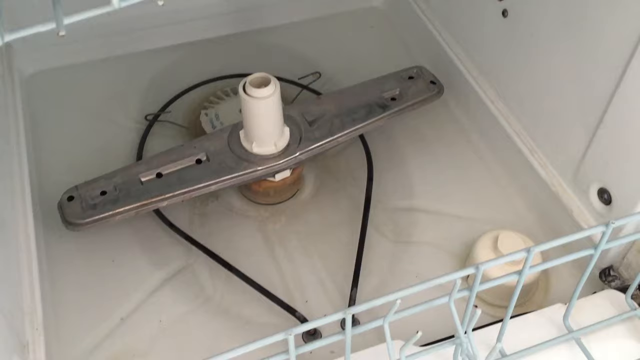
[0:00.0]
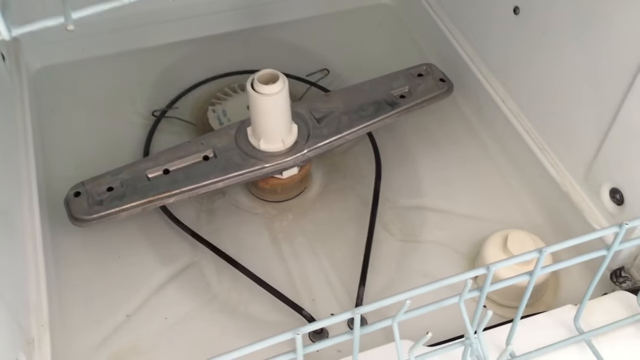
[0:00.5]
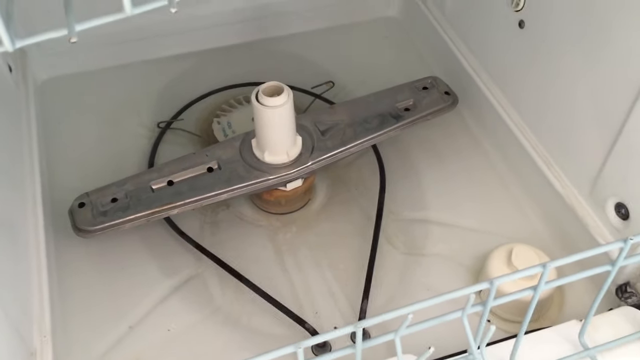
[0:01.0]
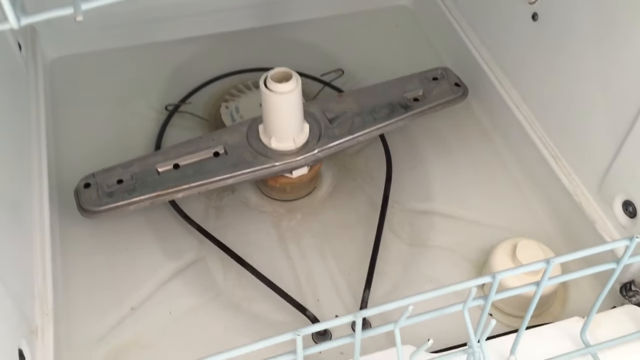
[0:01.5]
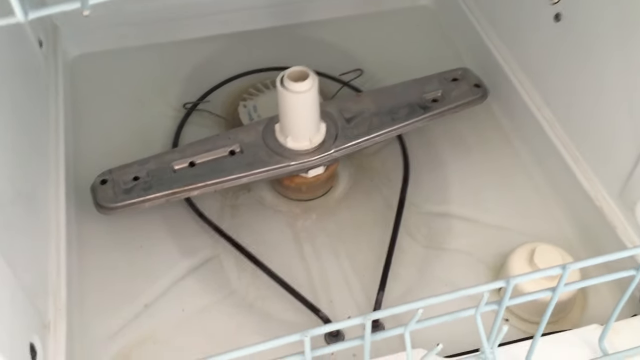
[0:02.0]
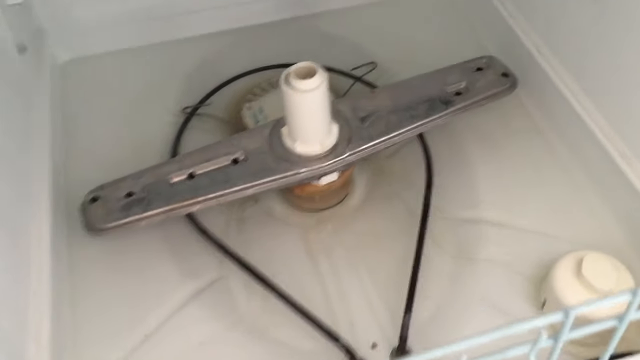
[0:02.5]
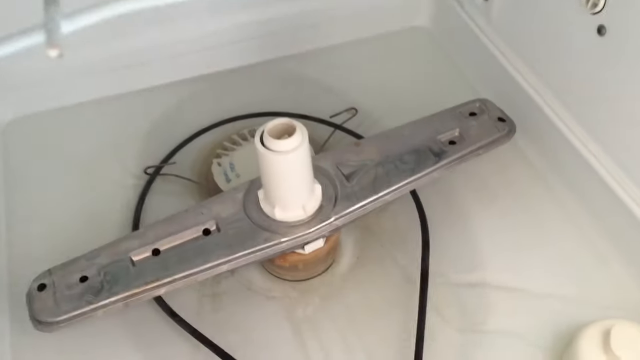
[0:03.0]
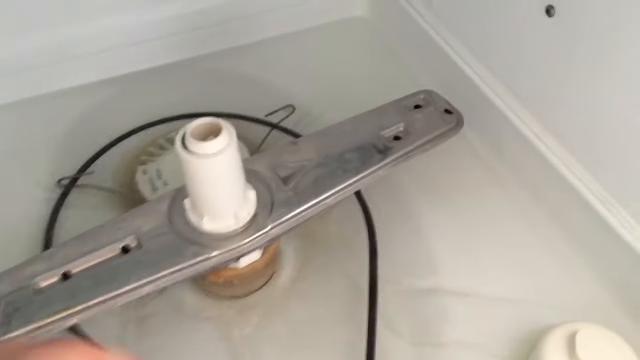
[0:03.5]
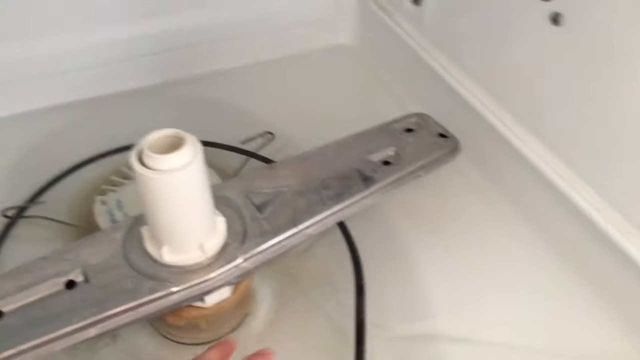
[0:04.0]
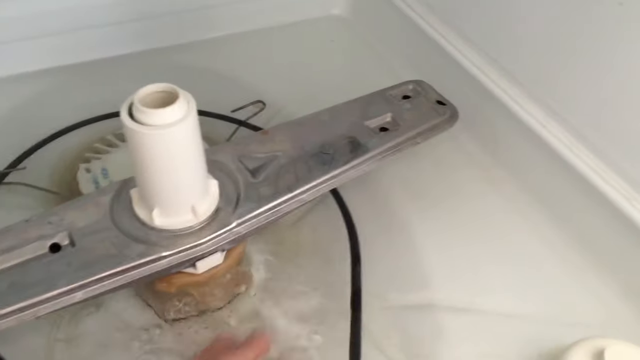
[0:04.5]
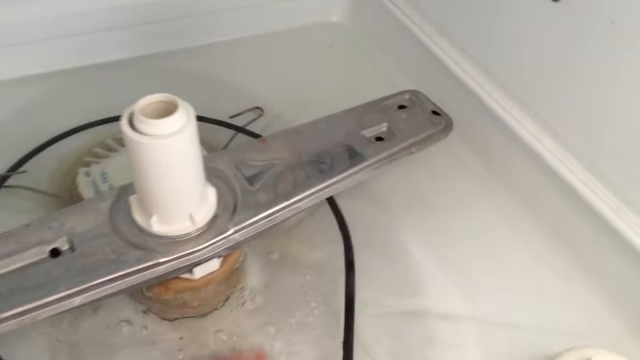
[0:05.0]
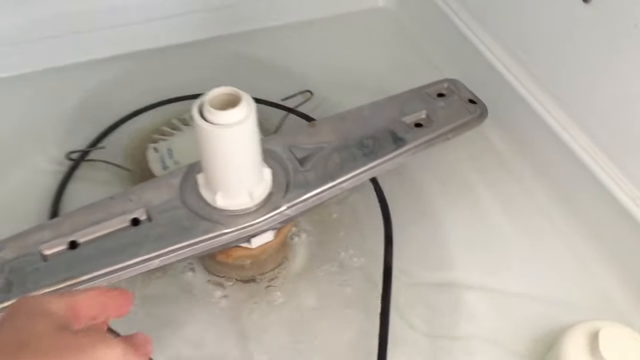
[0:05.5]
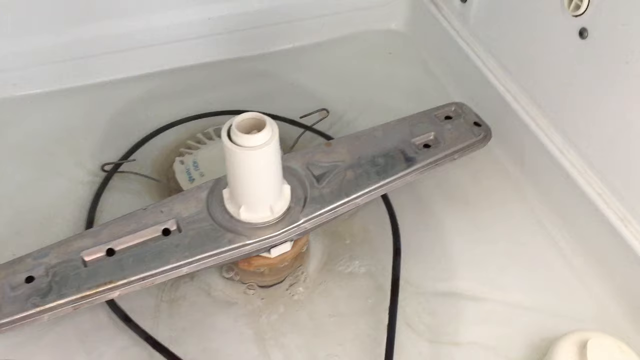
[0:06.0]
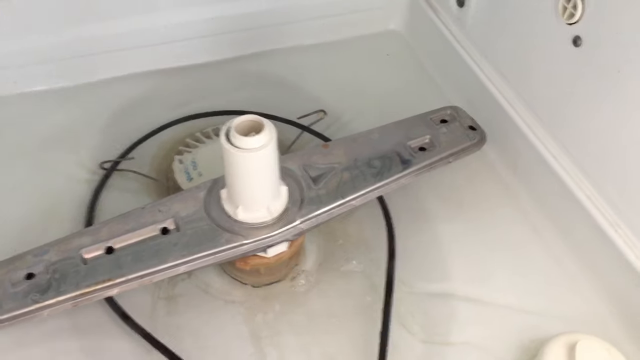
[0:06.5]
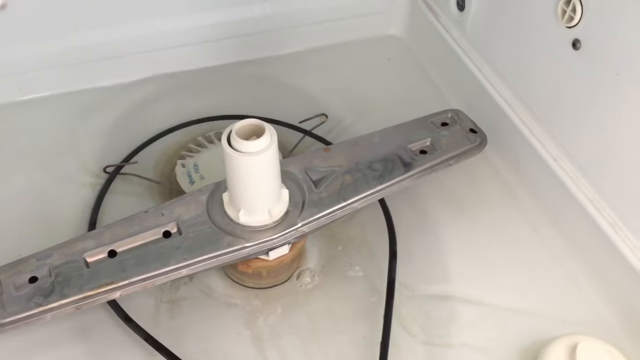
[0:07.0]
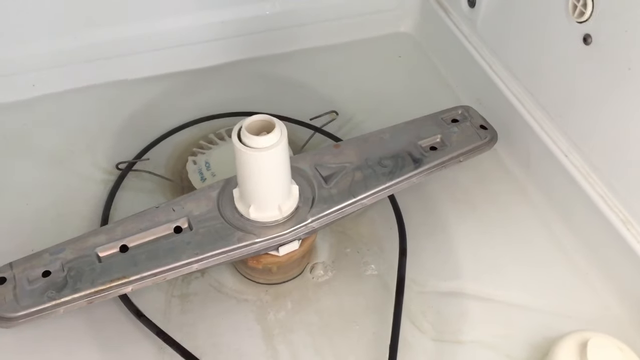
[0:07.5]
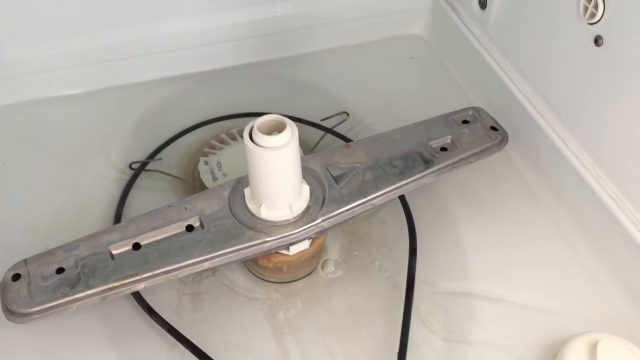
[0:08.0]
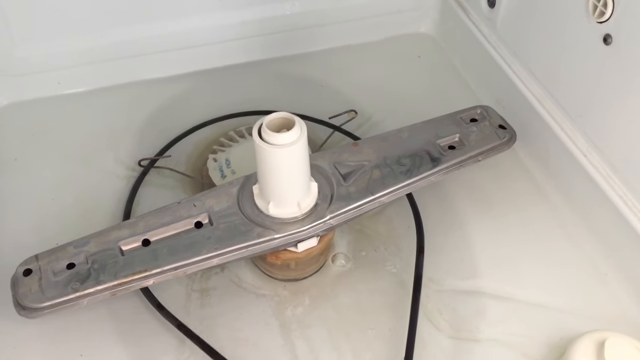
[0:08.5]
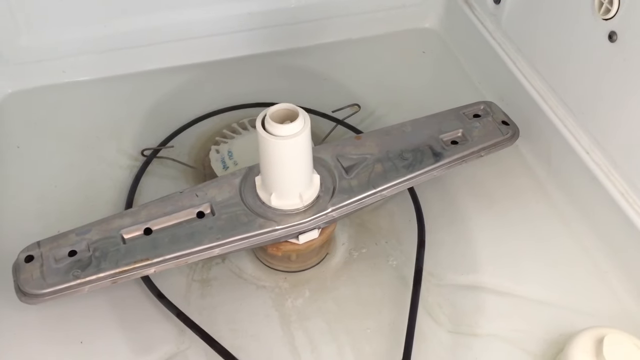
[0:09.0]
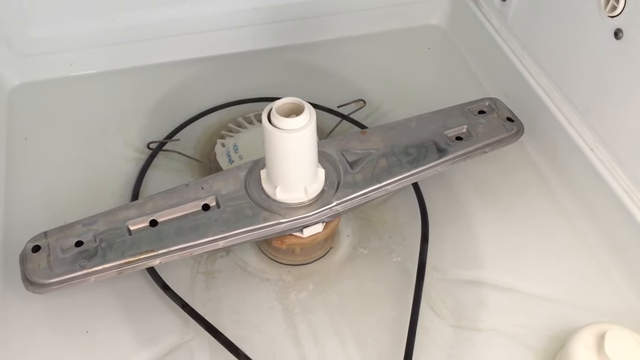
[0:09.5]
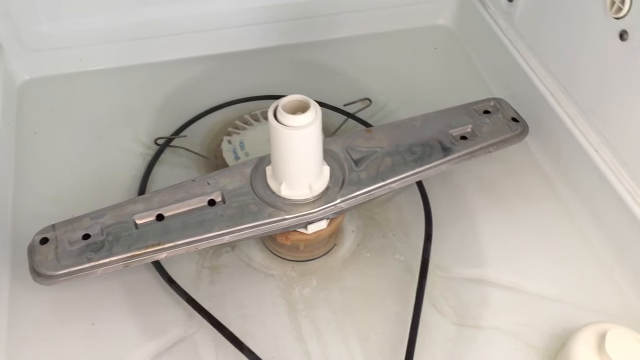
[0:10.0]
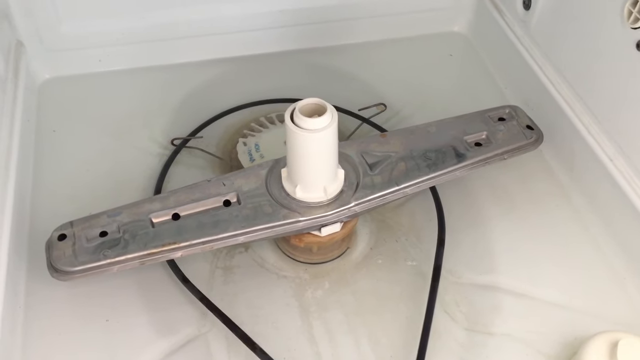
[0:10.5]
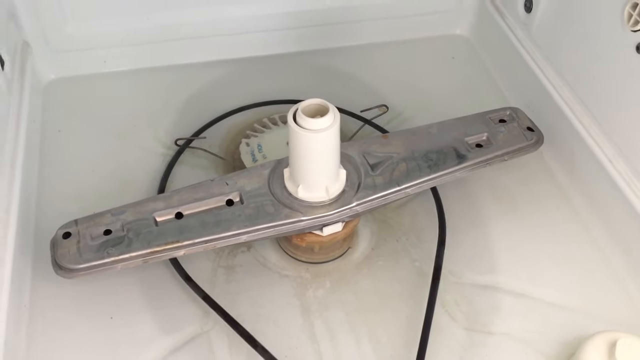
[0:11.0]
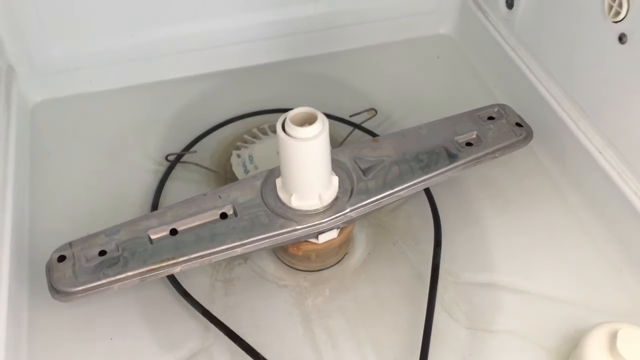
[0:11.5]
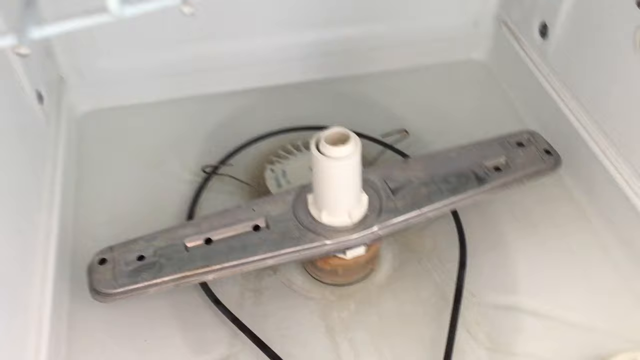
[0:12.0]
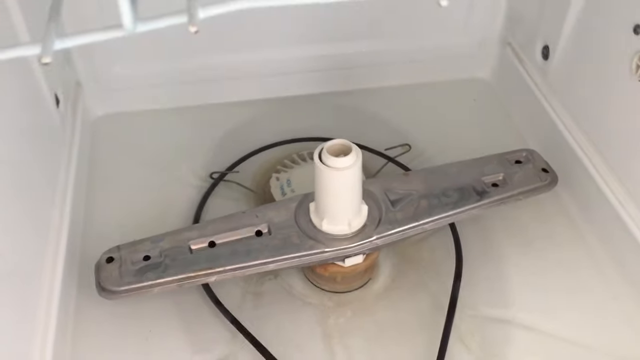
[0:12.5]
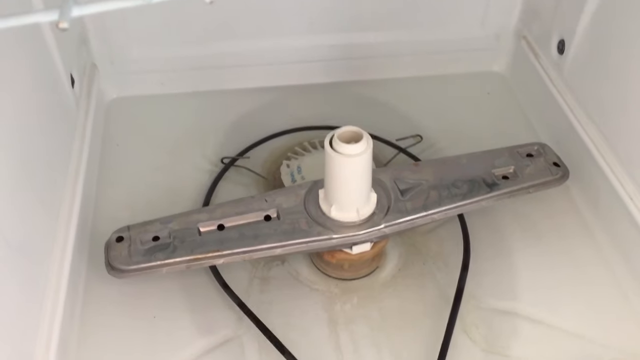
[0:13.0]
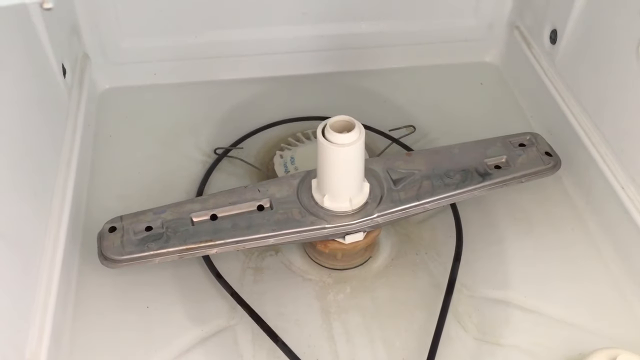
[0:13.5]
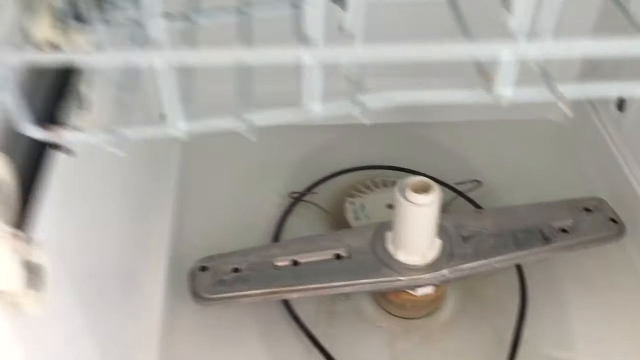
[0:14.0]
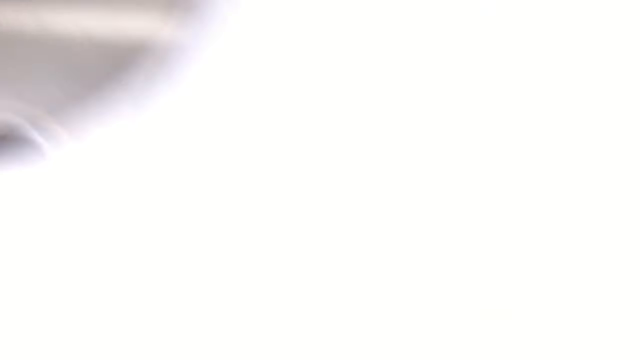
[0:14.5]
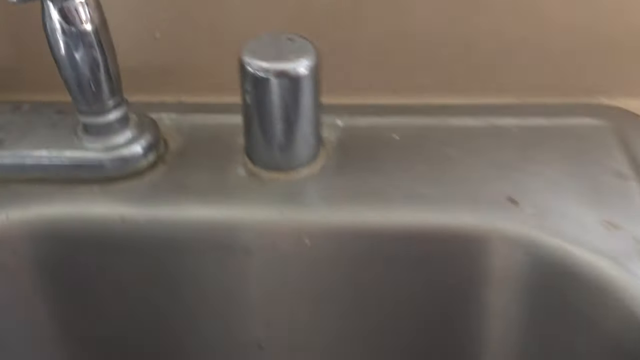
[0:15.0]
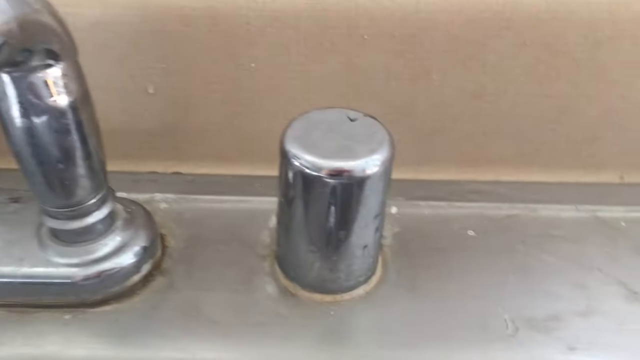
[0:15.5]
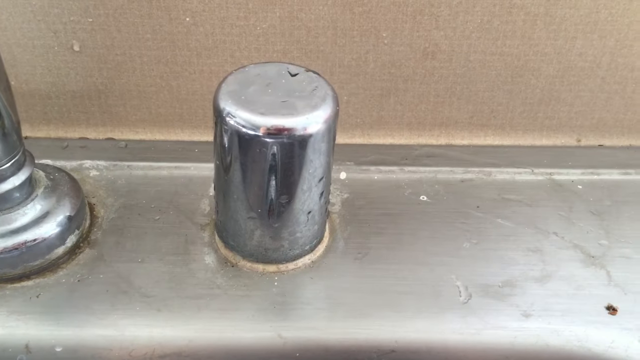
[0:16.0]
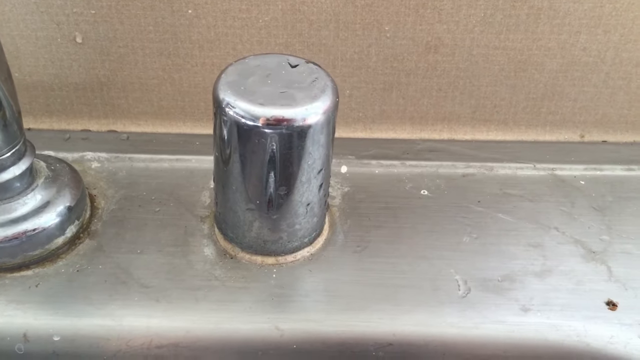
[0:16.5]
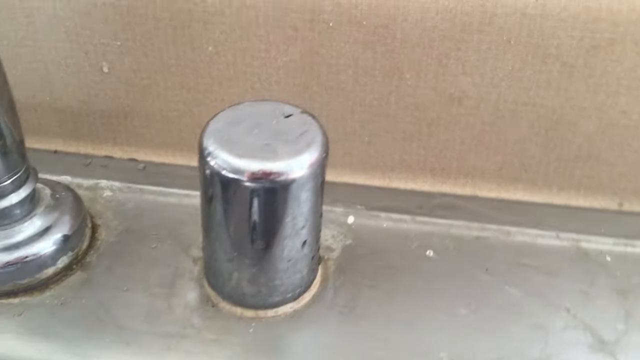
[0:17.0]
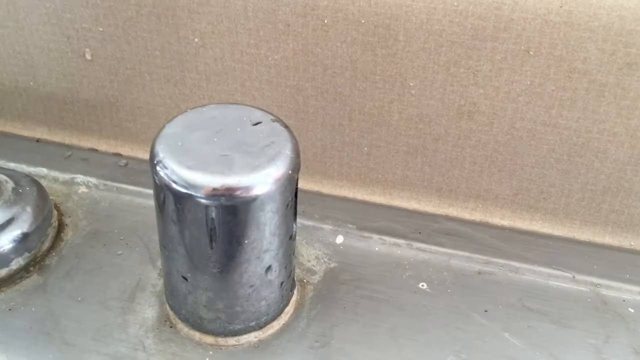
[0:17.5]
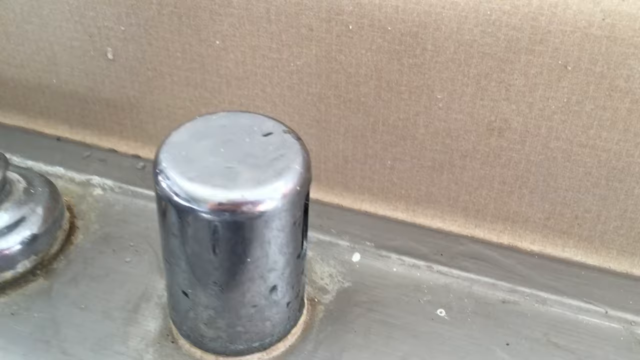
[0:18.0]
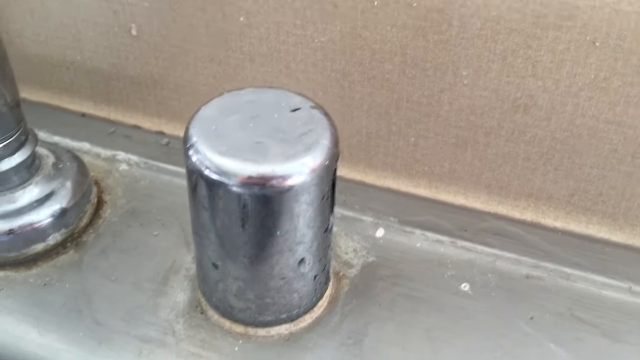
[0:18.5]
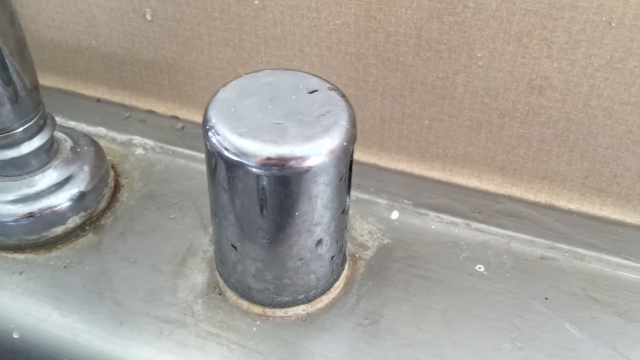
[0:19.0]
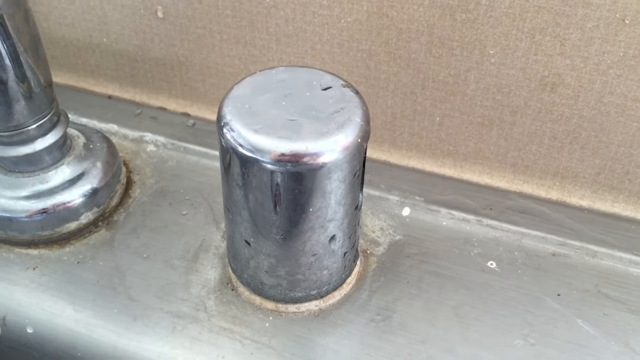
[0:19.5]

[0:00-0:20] The video opens inside what looks like a dishwasher. A white rack is partially visible in the bottom right corner of the screen, along with a center section with a drain behind it that has a metal bracket in the center and what appears to be some sort of black cable or wiring running around it in a loop. The camera focuses on the center area; a bit of a rack is briefly visible in the top left corner before the camera centers more on the center area. A person's hand comes in from the bottom center and sort of splashes around the water in the basin, then is removed. A few bubbles have formed in the water, and the device appears to no longer be draining properly, as water is standing in the bottom section. The camera shakes around because it is being held in hand, then moves up and toward the left, showing the top rack and then a stainless steel sink.